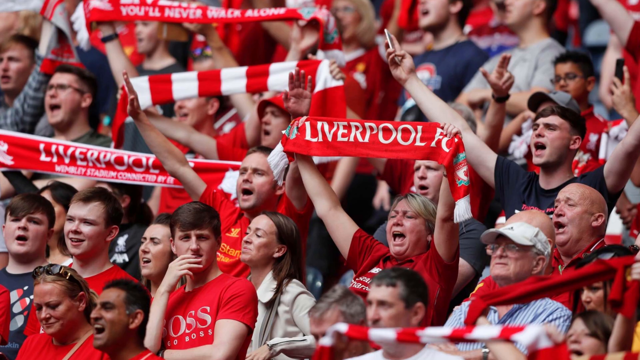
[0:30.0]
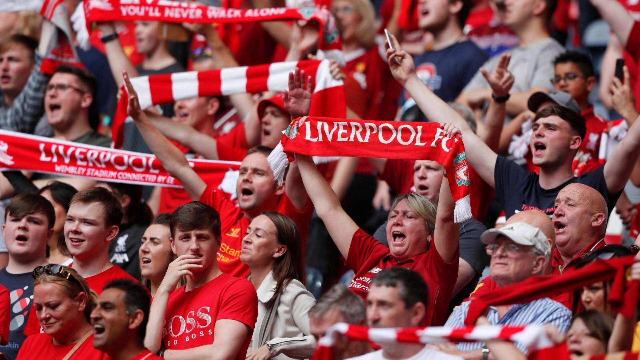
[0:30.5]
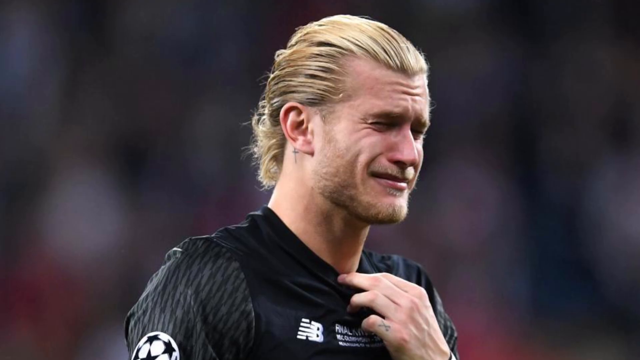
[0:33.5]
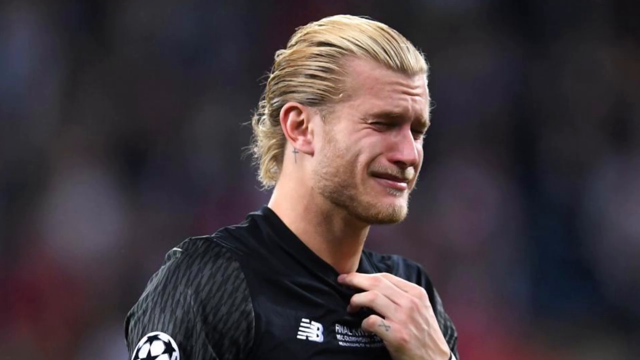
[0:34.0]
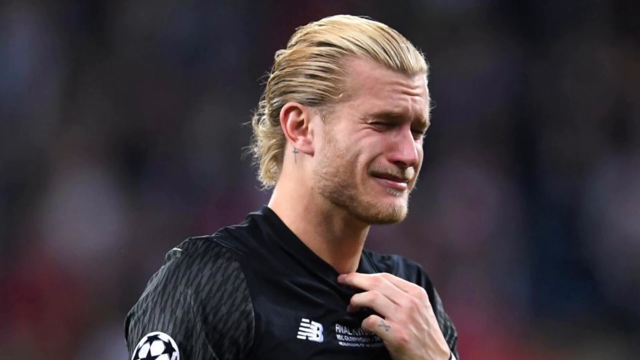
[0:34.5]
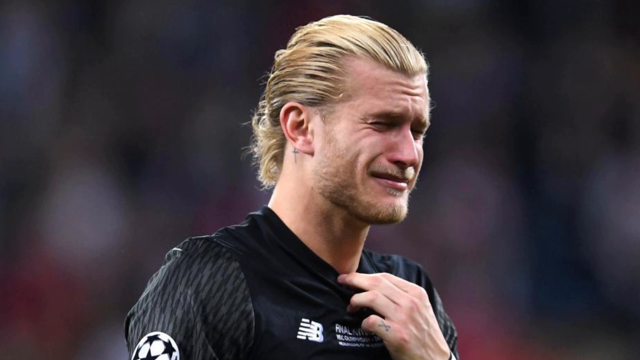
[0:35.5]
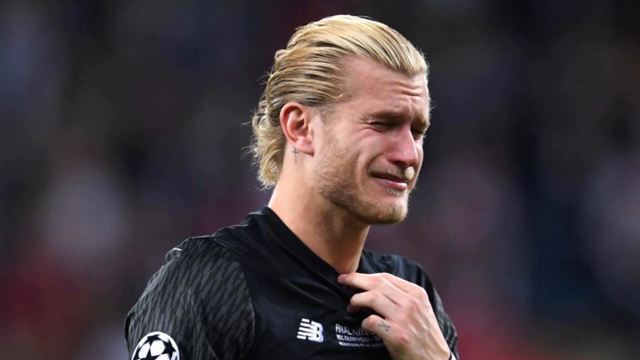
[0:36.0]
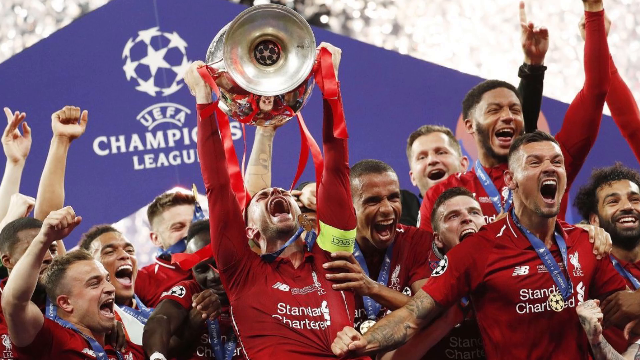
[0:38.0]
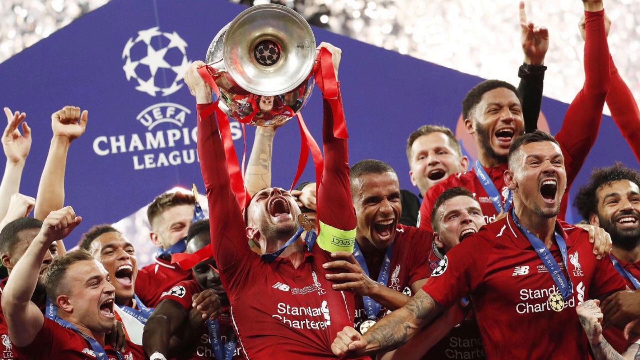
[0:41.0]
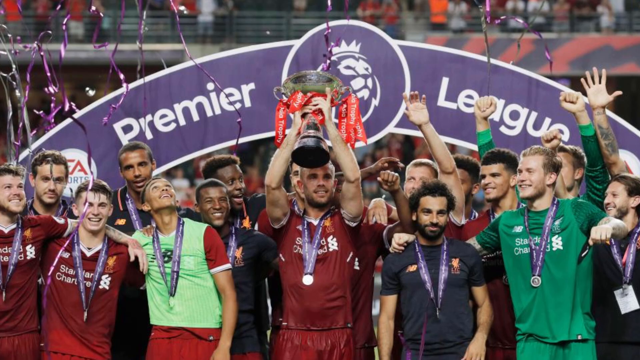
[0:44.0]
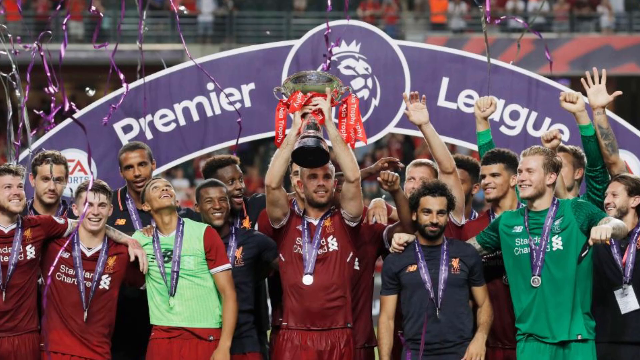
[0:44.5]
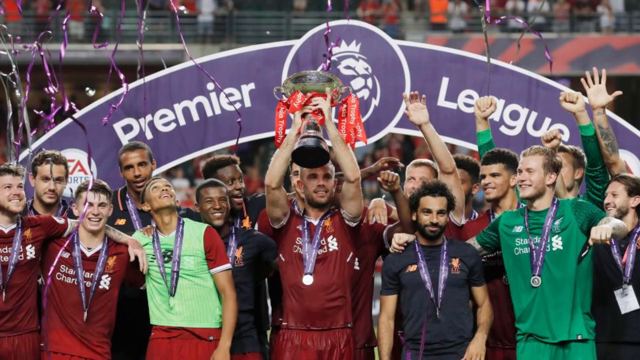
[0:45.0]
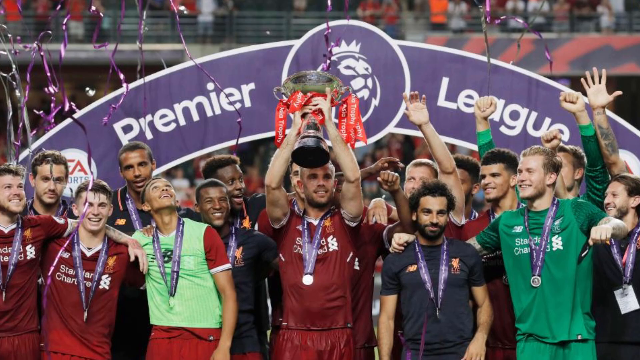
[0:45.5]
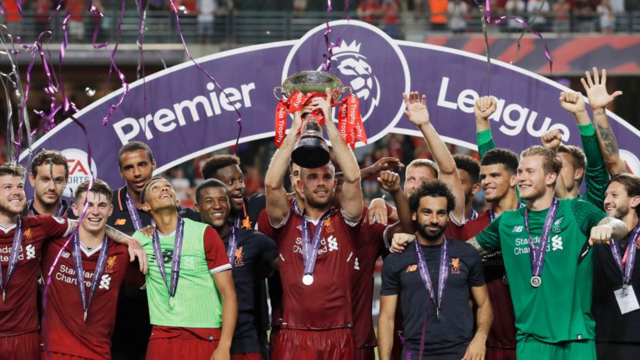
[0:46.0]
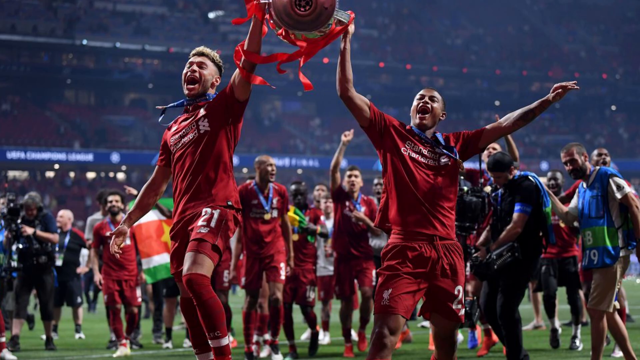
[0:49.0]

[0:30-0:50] A large crowd of people appears to be in stands, probably watching a game of some kind. Many of them wear red tops, usually short-sleeved shirts, and there are both males and females. In the bottom right, a man who looks to be in his 60s wears a white ball cap of some kind and glasses. Some of the banners people hold are scarves held over their heads, including a red one with white lettering that says "Liverpool". The scene switches to a Caucasian man with blonde hair and a light beard who looks sad; he has a cross earring in his right ear and wears a black top. The scene switches again to a group of players who appear to be either rugby or soccer players, probably soccer players judging by the background. Most wear red shirts with white text. One of them holds a very large trophy over his head with both hands, mouth open as if cheering.